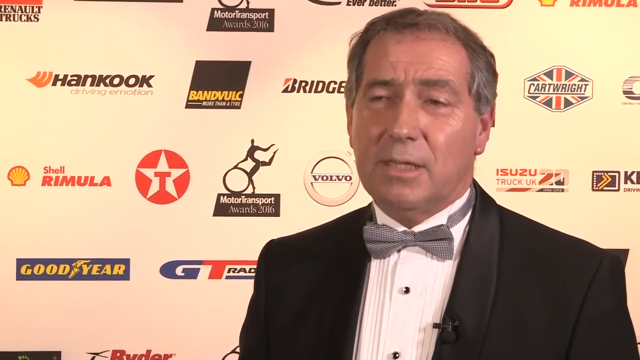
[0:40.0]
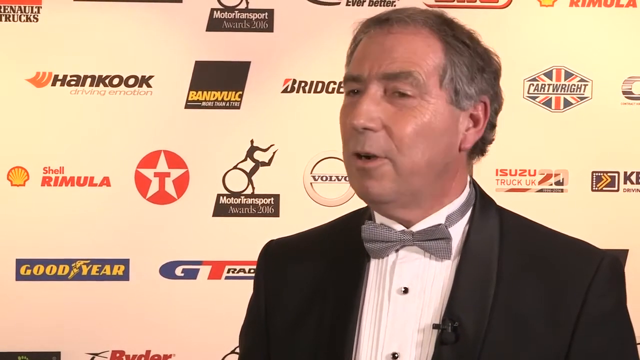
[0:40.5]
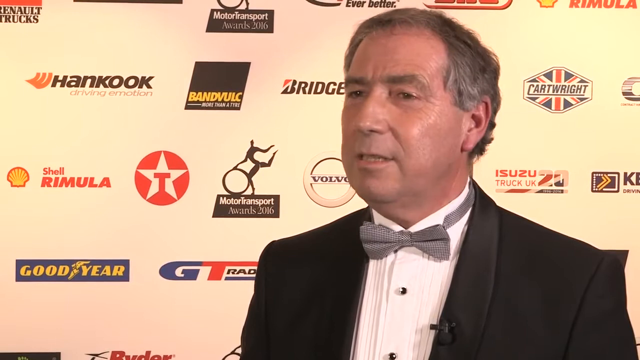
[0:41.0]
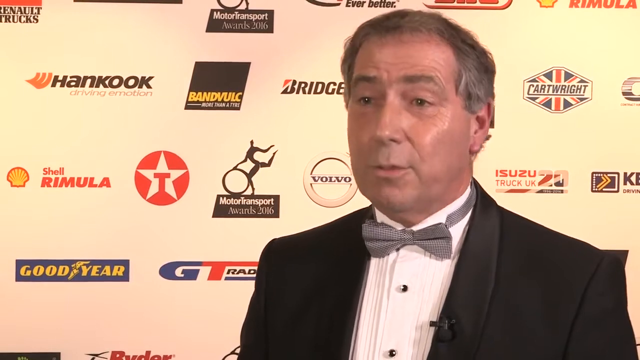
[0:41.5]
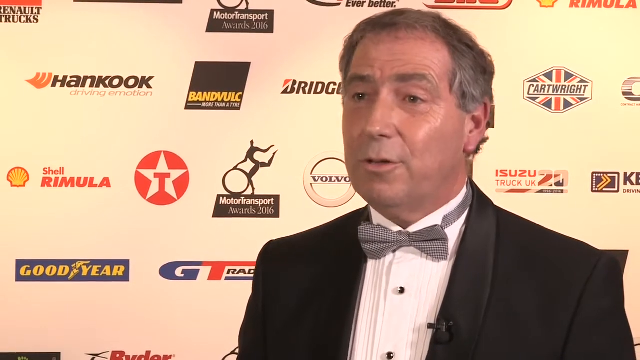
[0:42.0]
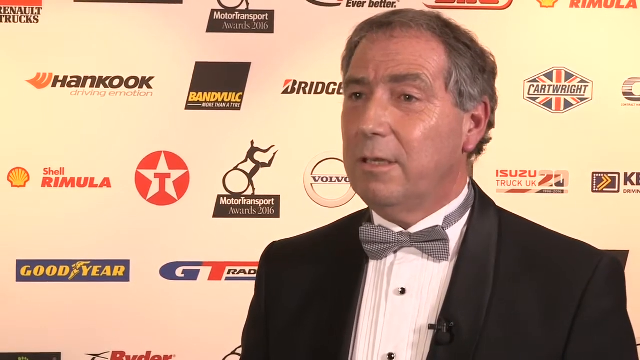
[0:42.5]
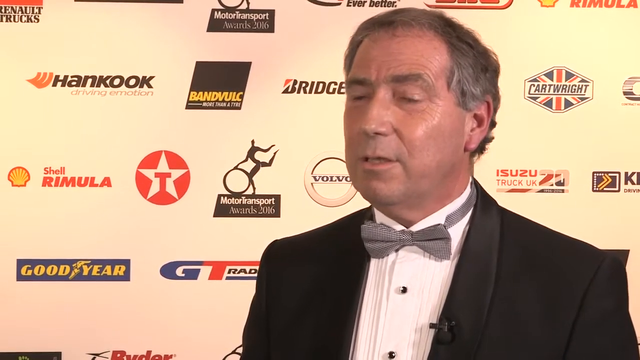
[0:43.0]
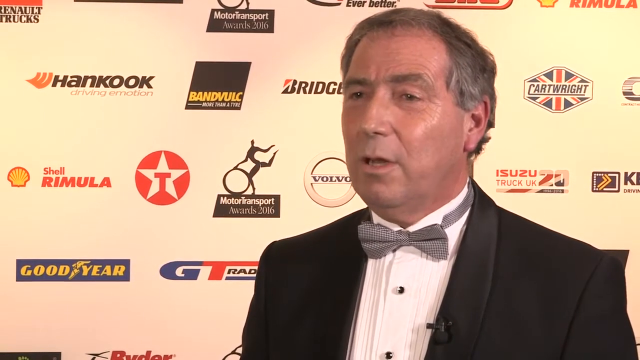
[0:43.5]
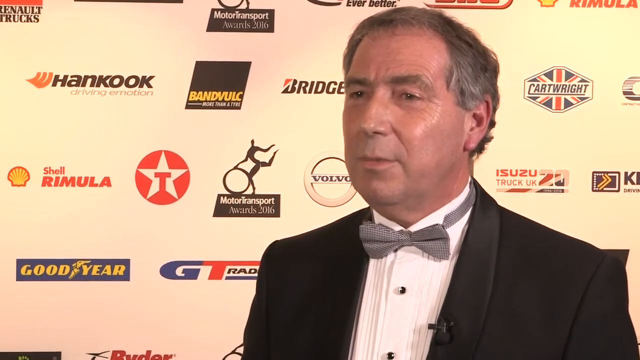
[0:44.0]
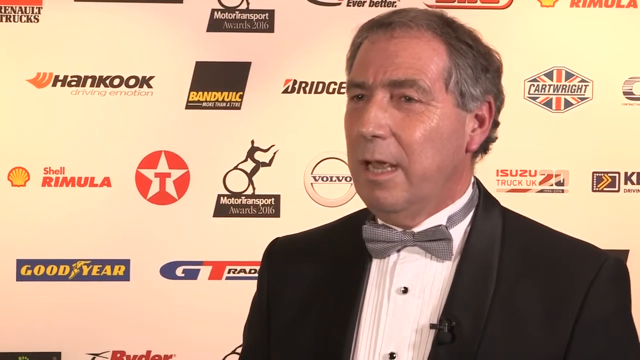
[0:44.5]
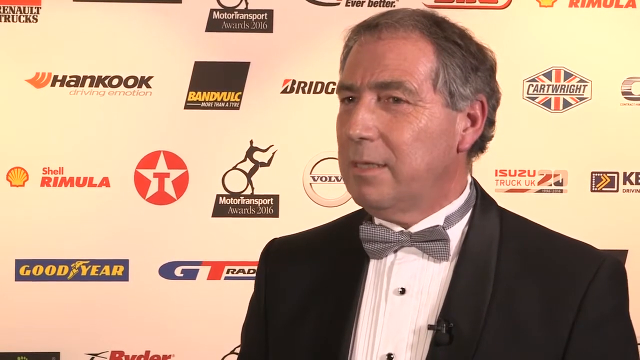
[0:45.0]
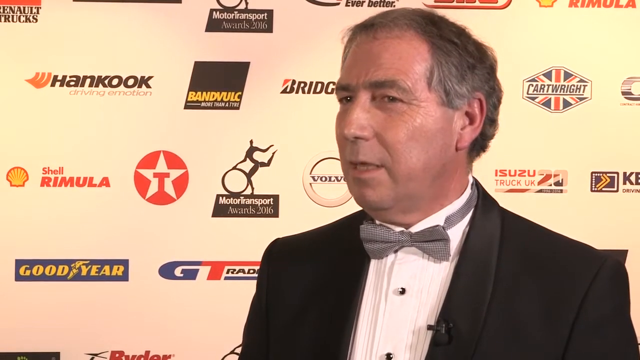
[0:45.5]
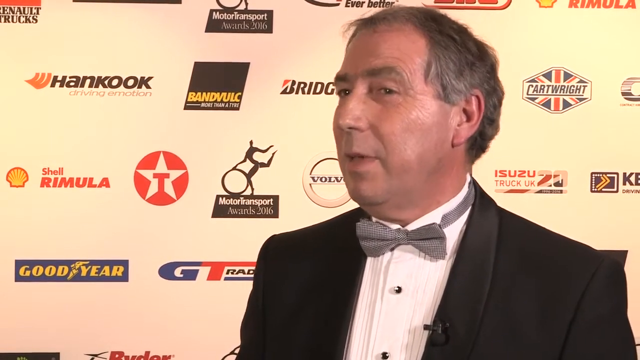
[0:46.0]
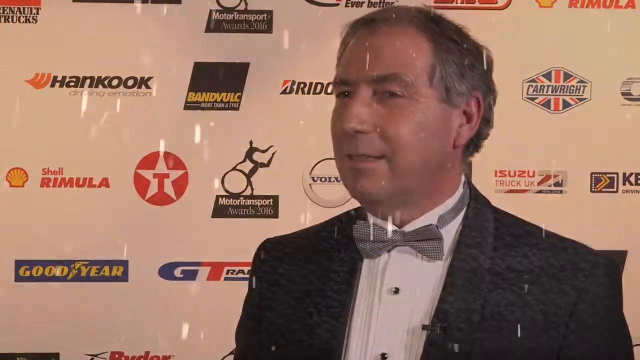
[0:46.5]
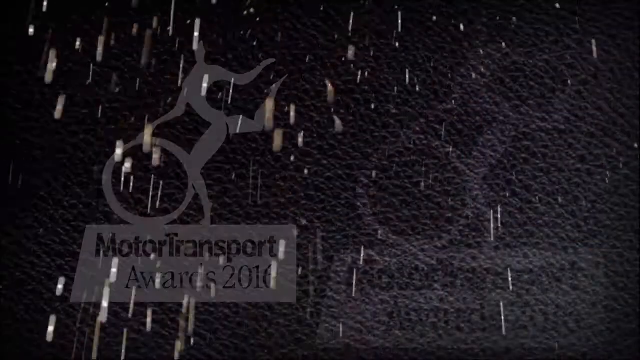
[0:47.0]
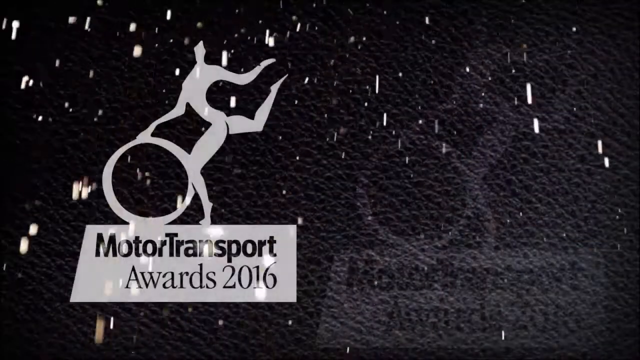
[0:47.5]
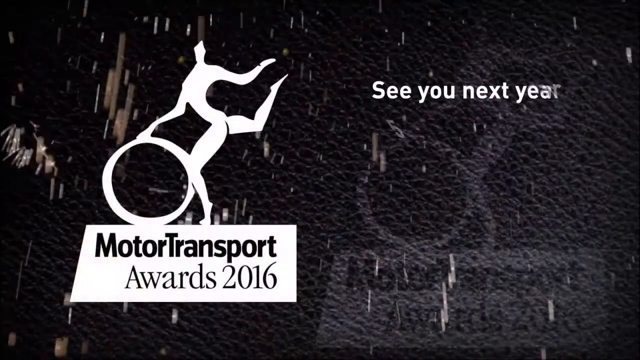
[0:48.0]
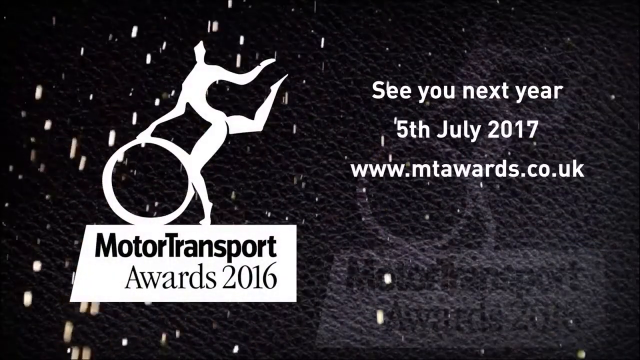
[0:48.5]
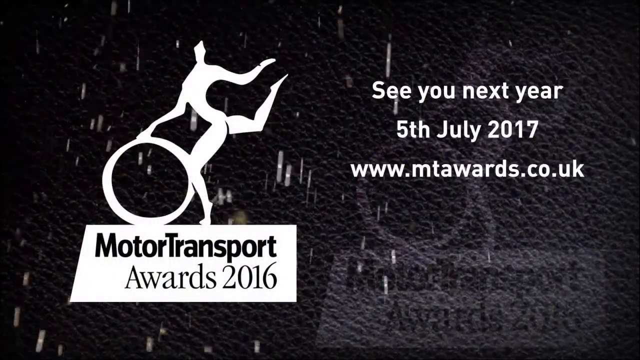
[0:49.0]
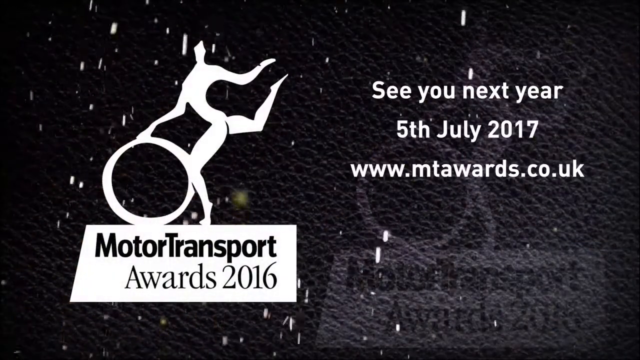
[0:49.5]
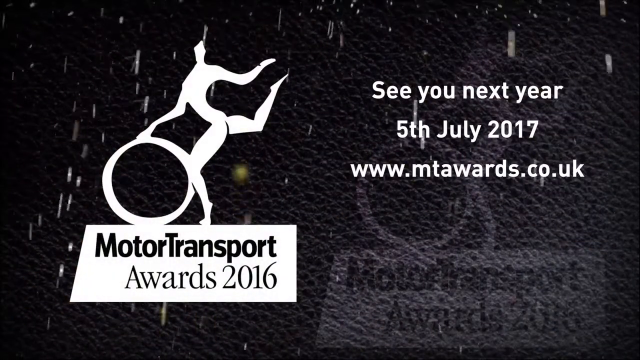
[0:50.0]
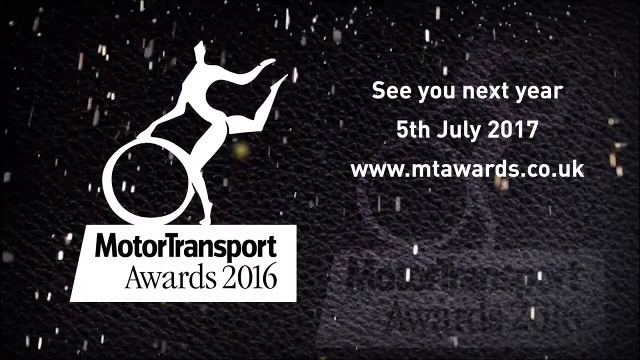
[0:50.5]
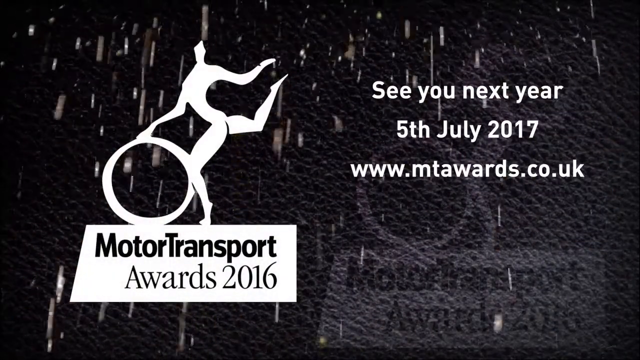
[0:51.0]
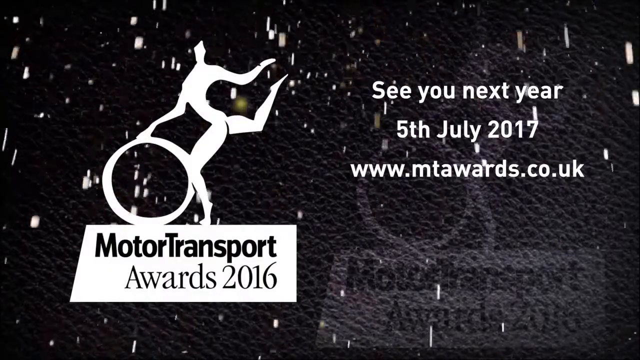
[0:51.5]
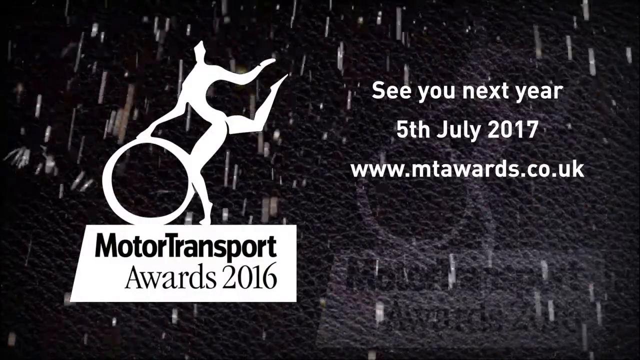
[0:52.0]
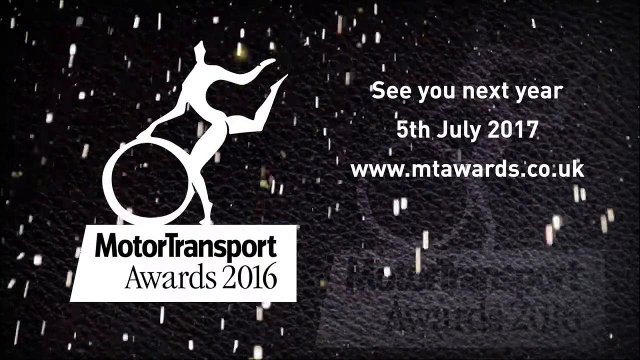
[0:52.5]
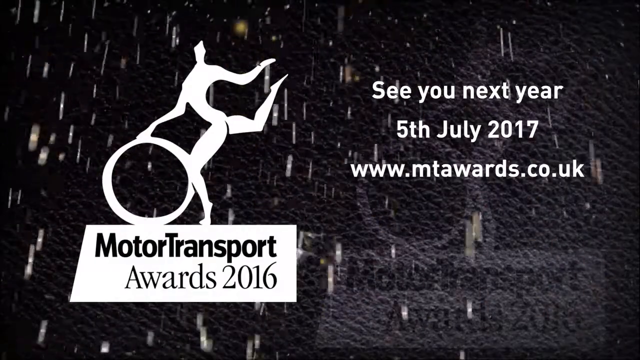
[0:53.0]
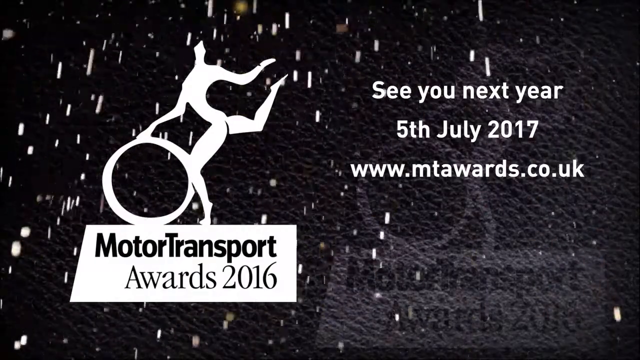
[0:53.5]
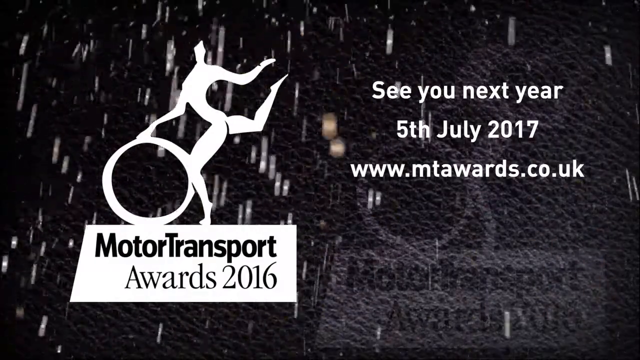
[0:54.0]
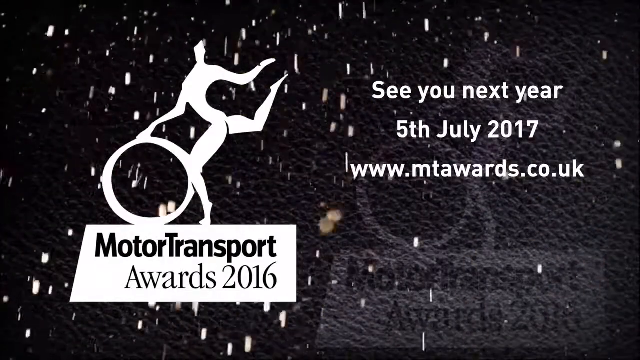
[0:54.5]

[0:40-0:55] Ray stands in front of the sponsors, still wearing the black tuxedo and gray bowtie, with gray hair. Additional sponsor names include GT Radials. The video then returns to its original opening and shows the "Motor Transport Awards 2016" logo again. White lettering reads "see you next year, 5th July 2017", with the web address "www.mtaawards.co.uk". The background again has a leather look, with rain coming down. The video ends with the website address coming across the bottom or to the right of the screen.